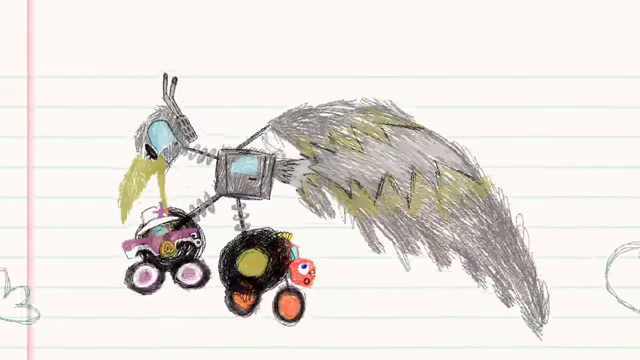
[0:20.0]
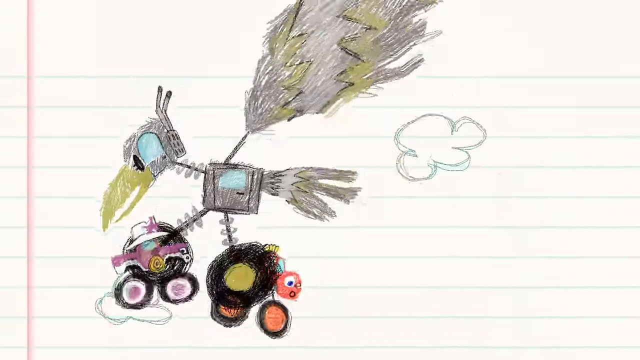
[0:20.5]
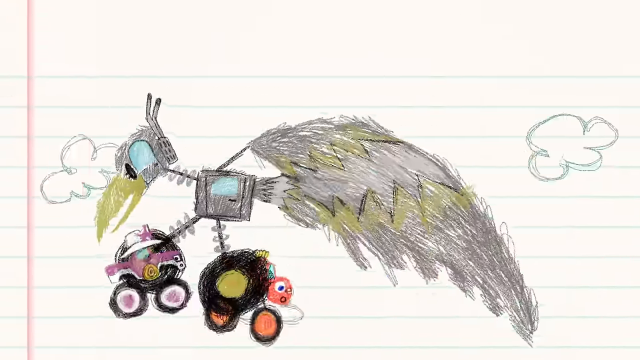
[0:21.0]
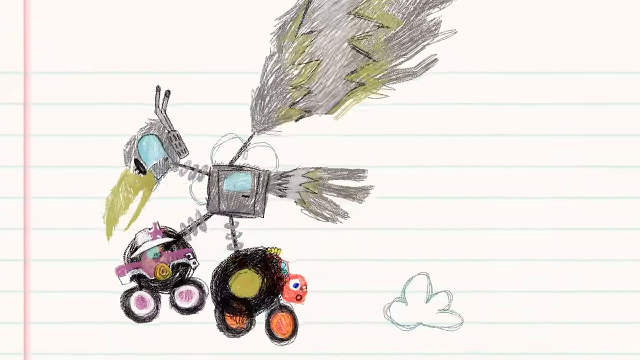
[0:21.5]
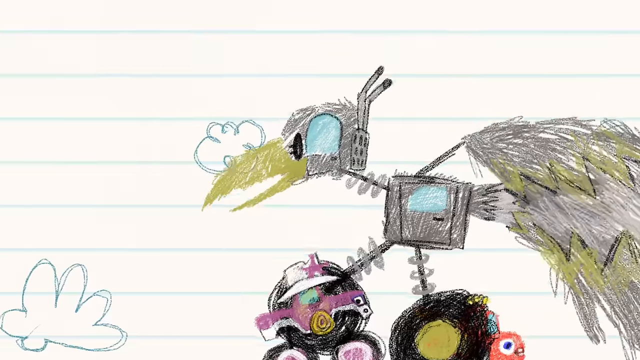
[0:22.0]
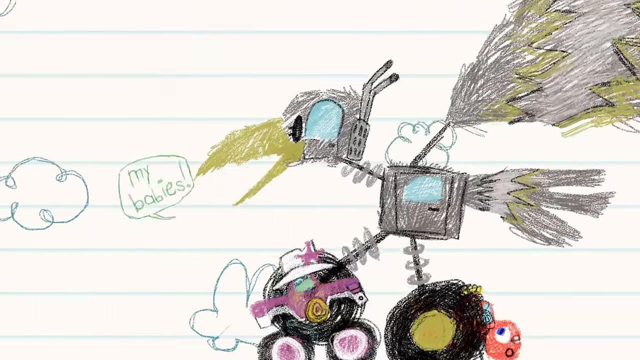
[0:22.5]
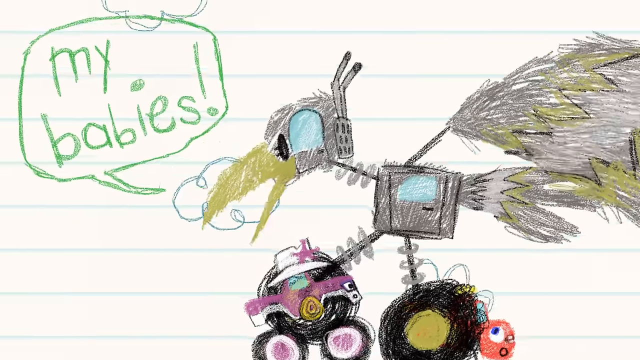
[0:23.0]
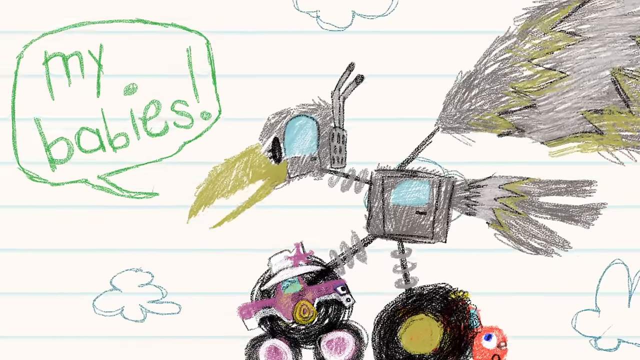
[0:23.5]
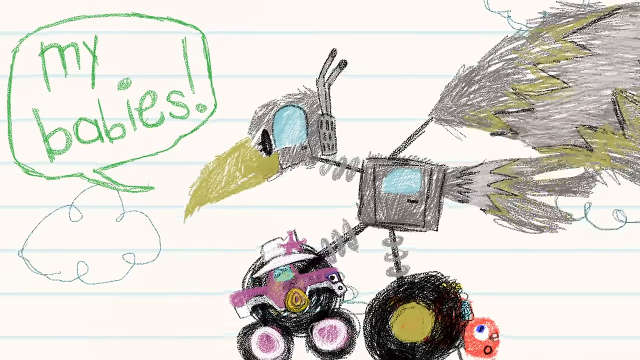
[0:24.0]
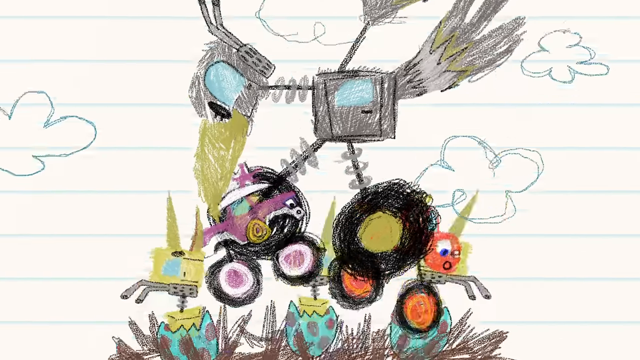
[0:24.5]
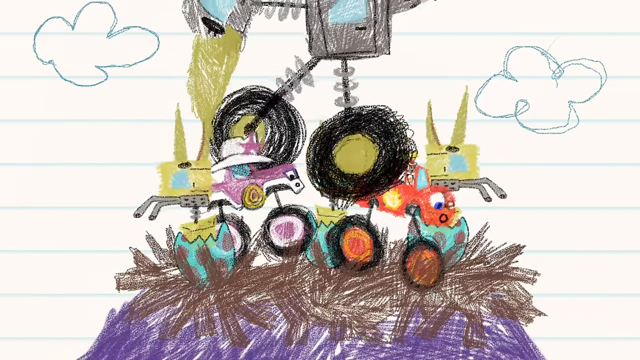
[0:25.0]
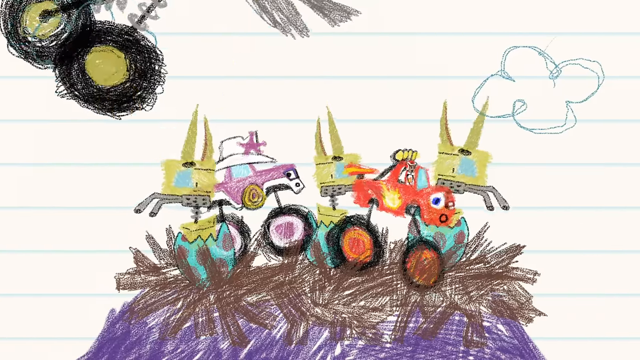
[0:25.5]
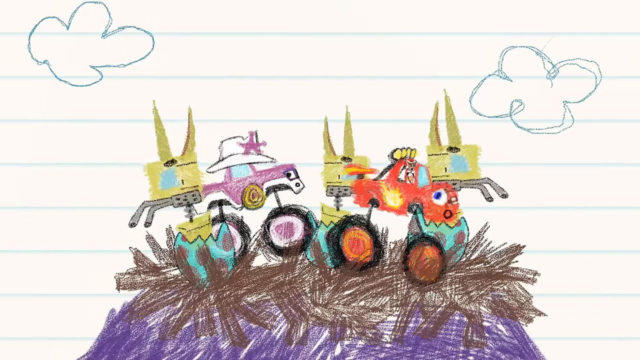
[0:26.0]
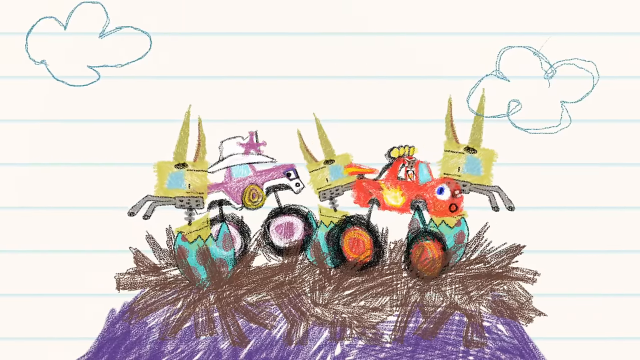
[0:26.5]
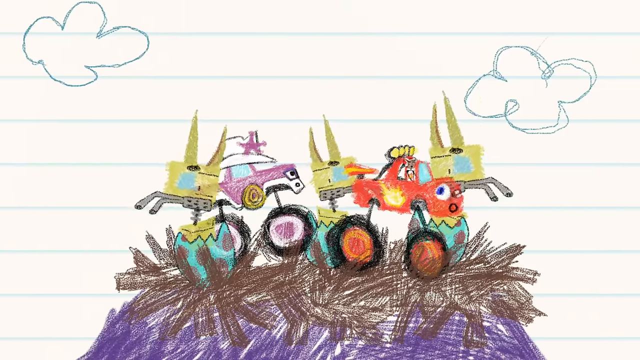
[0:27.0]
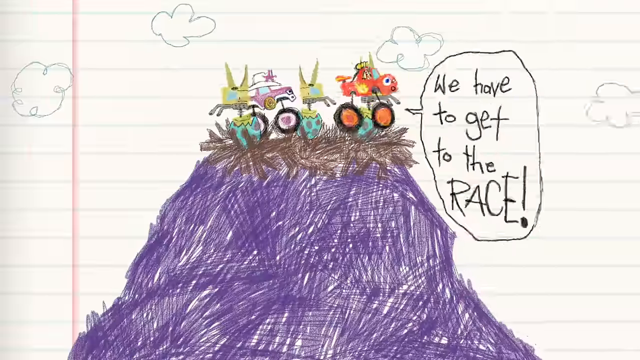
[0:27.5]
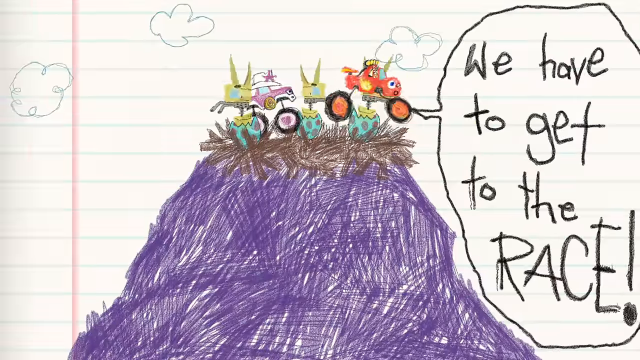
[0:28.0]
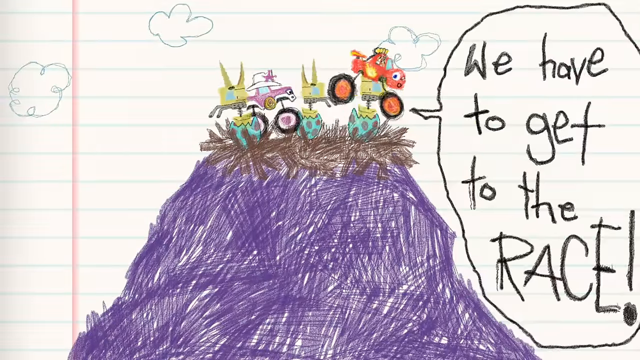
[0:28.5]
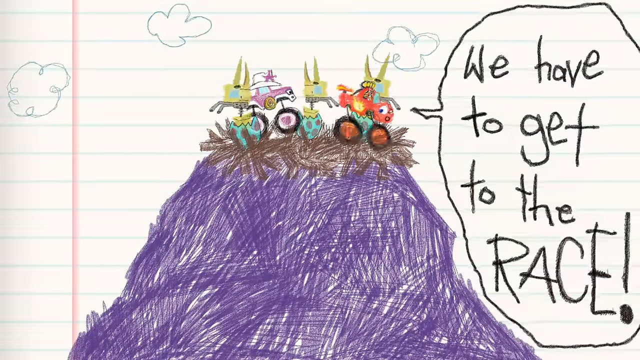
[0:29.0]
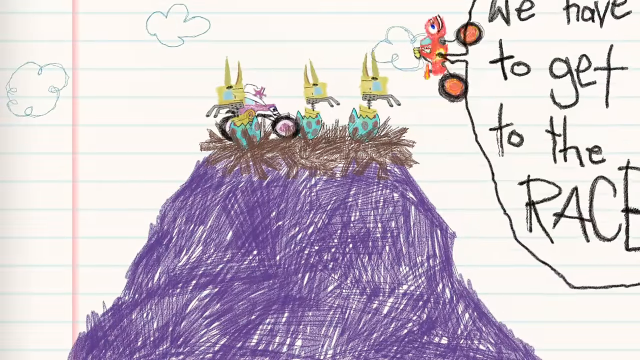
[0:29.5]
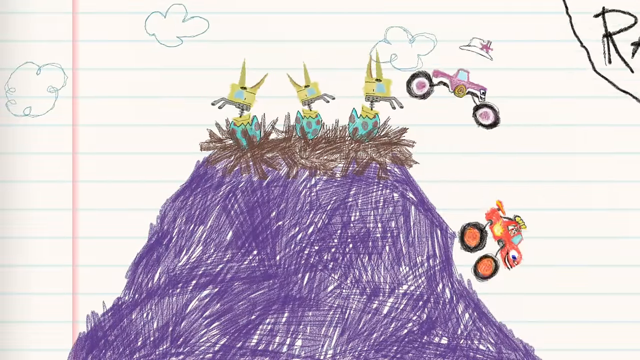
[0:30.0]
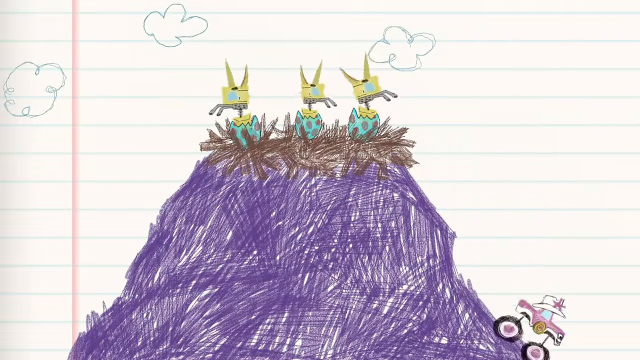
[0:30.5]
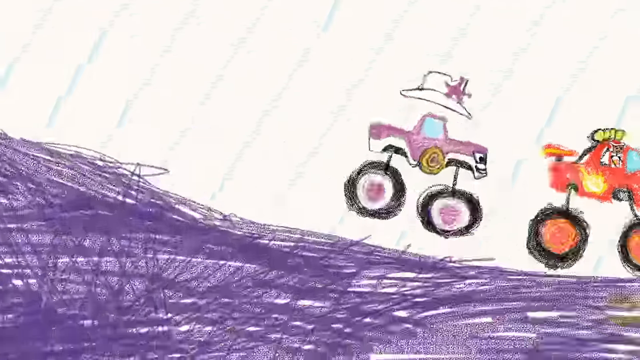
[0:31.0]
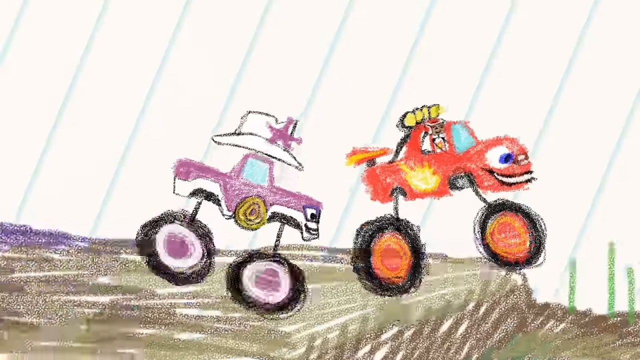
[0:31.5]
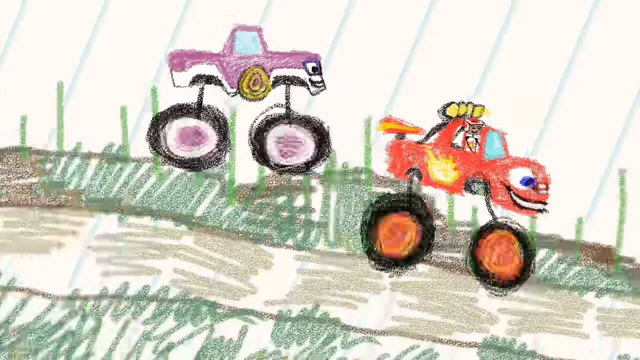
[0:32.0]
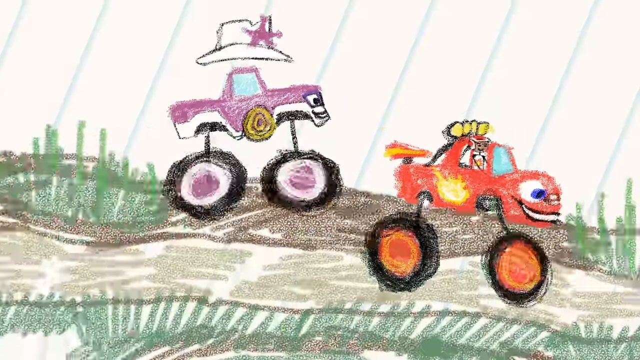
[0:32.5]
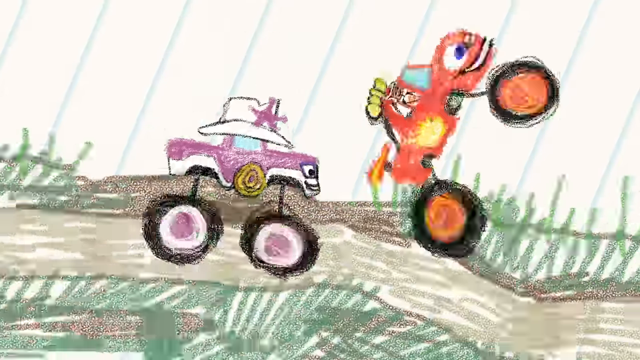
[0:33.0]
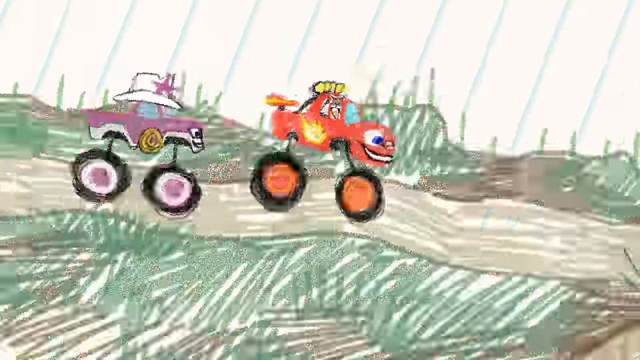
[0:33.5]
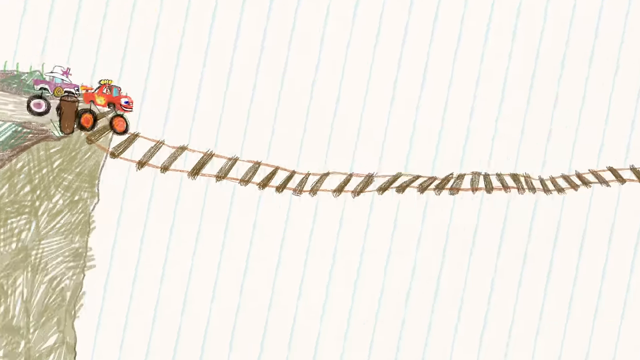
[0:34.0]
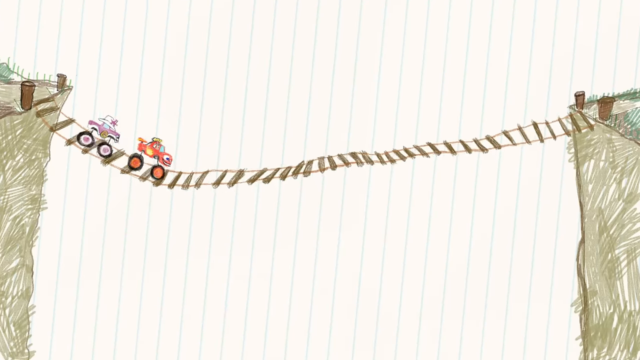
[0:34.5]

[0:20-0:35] The mechanical-looking bird carrying the cars through the sky says "my babies" and drops the two cars on top of a mountain where a nest has been built, with three baby birds in it. The mother bird drops the cars into the nest, and the cars say to each other "we have to get to the race." They drive down the side of the mountain and come to a wooden bridge that connects the land on either side of a gorge. As they cross, the wooden bridge sinks and kind of goes down, and the shot ends with them in the middle of the bridge trying to get to the other side.